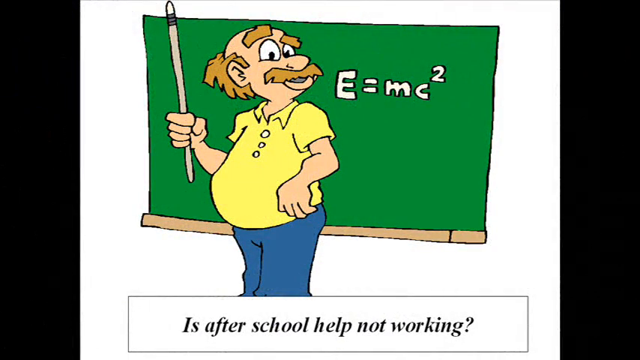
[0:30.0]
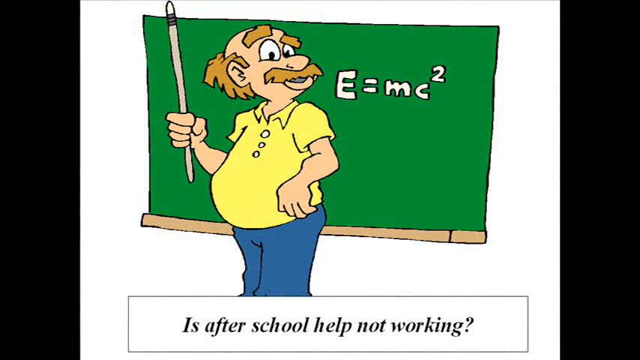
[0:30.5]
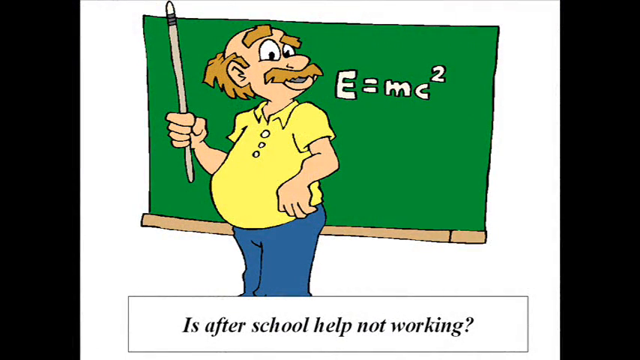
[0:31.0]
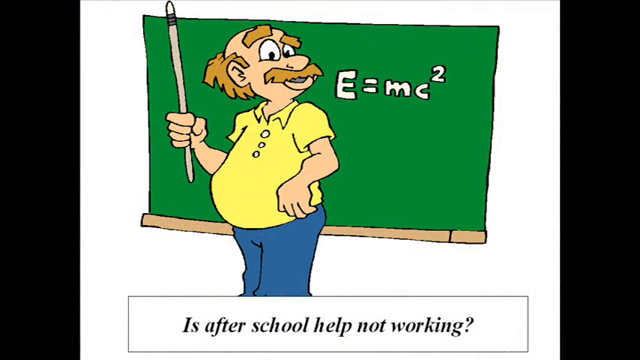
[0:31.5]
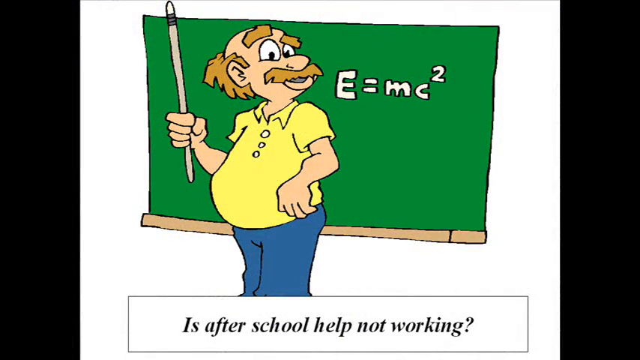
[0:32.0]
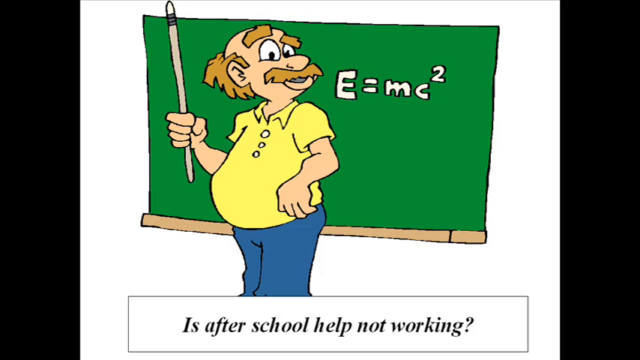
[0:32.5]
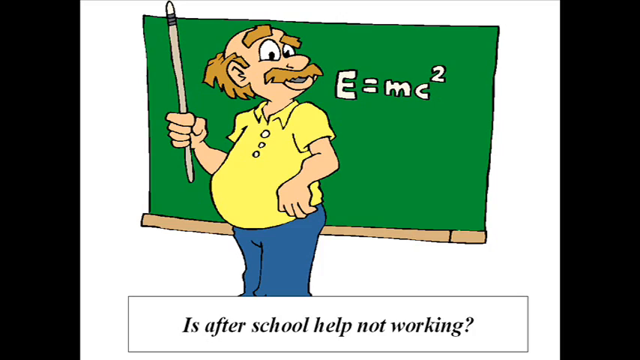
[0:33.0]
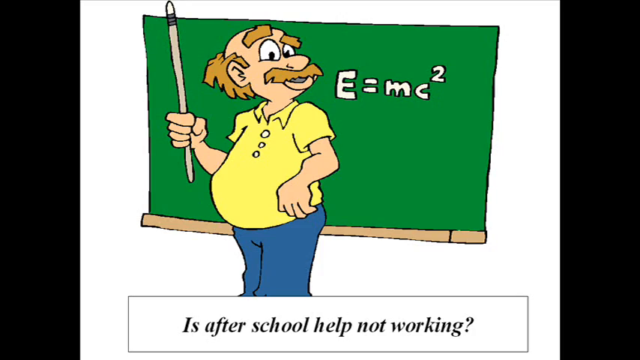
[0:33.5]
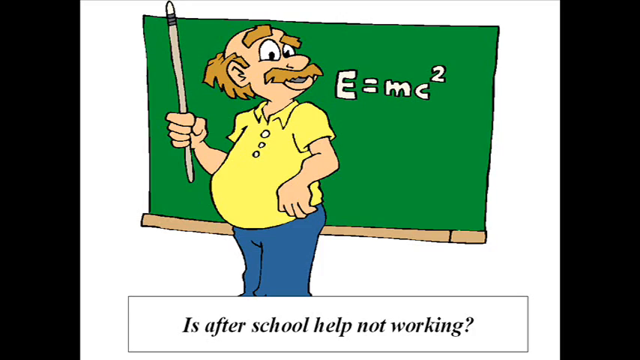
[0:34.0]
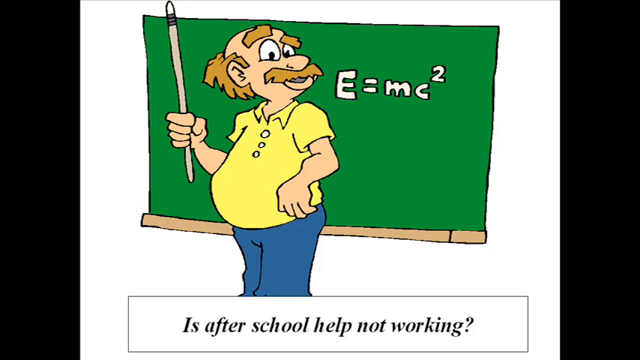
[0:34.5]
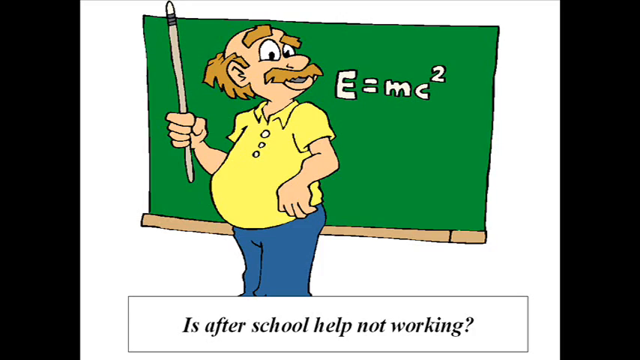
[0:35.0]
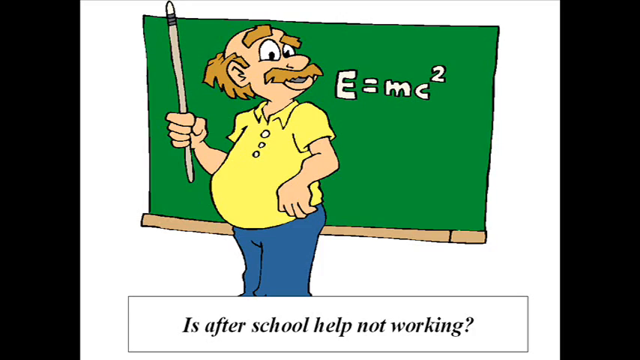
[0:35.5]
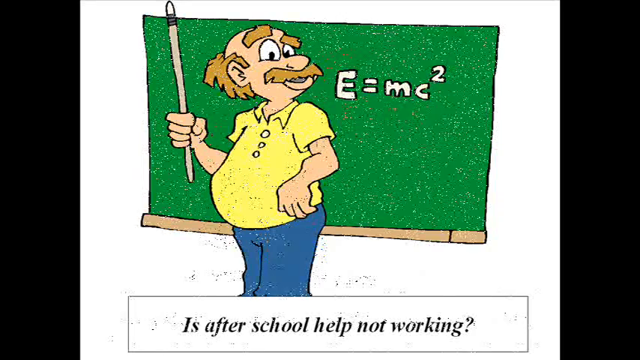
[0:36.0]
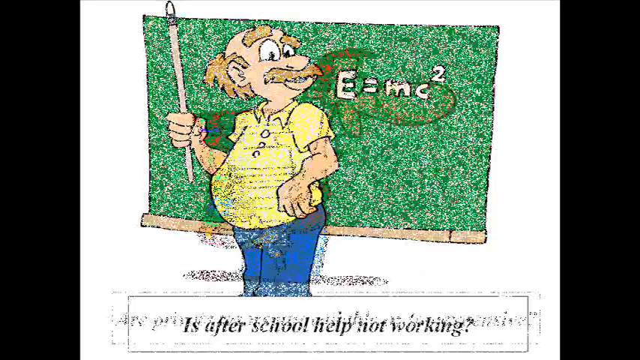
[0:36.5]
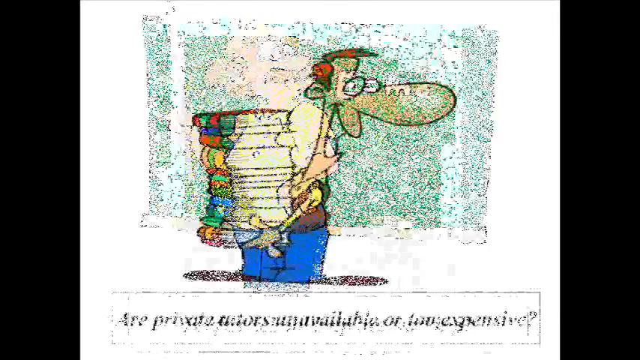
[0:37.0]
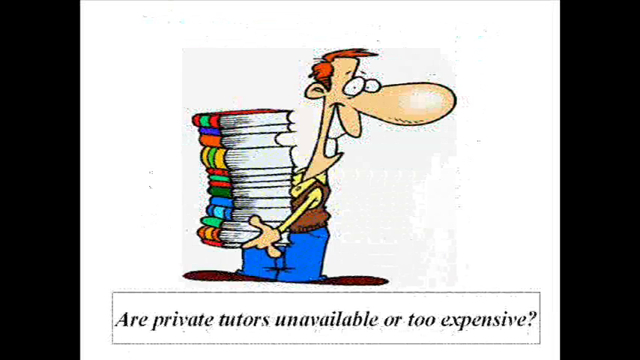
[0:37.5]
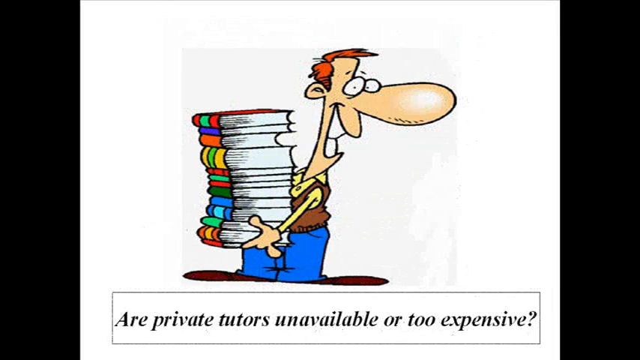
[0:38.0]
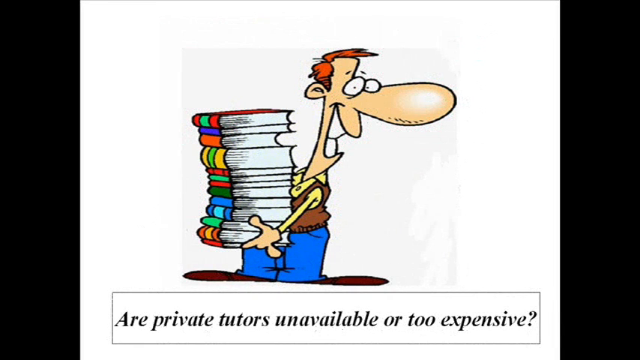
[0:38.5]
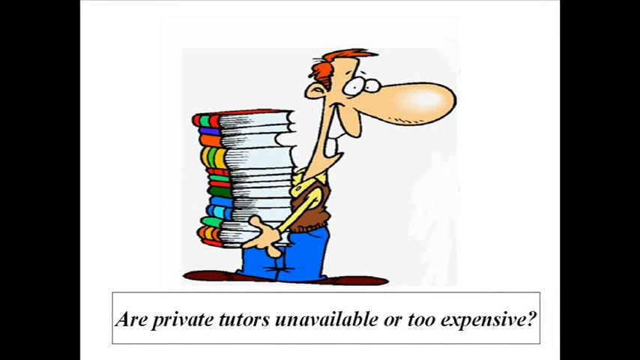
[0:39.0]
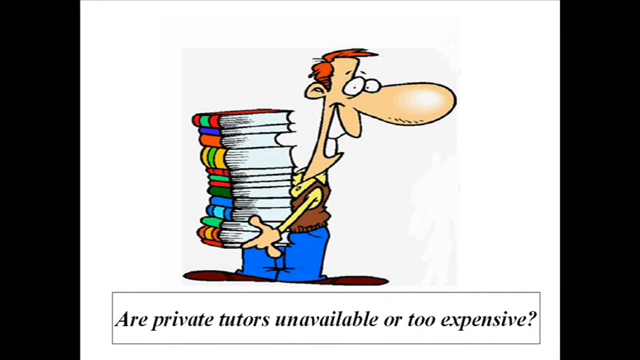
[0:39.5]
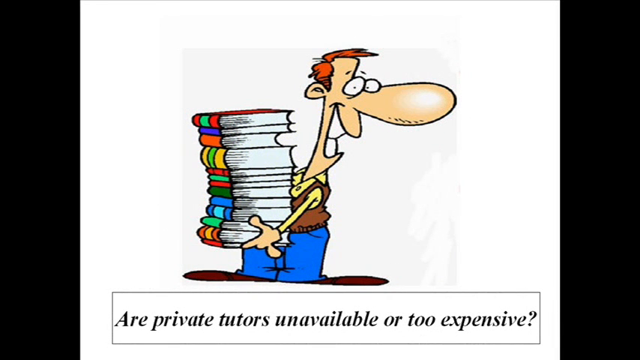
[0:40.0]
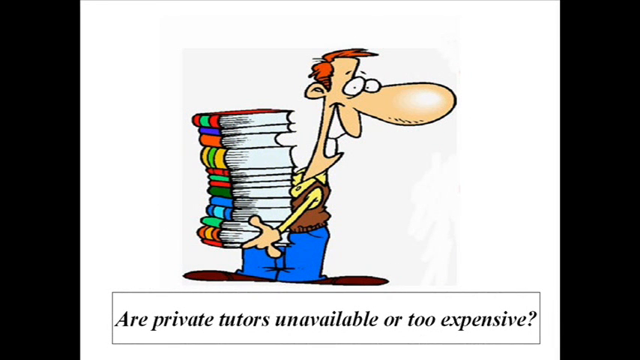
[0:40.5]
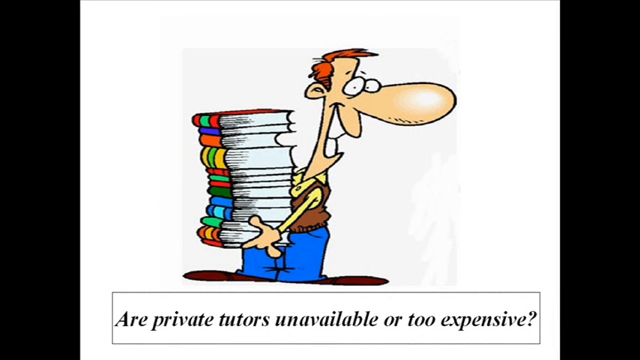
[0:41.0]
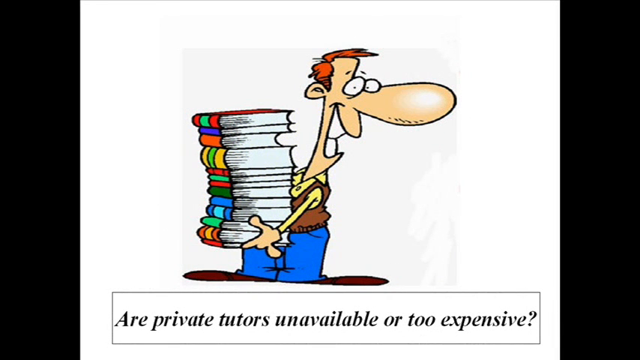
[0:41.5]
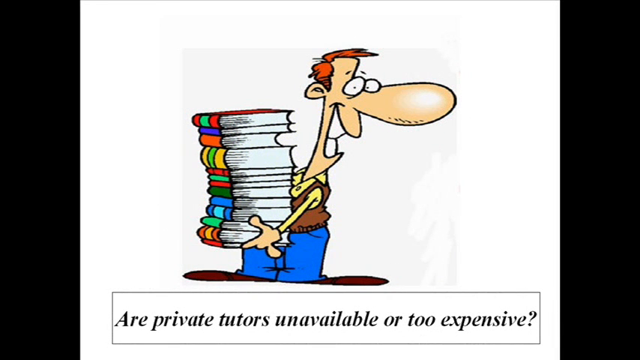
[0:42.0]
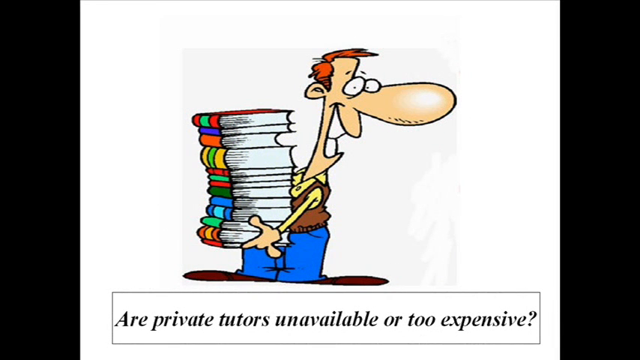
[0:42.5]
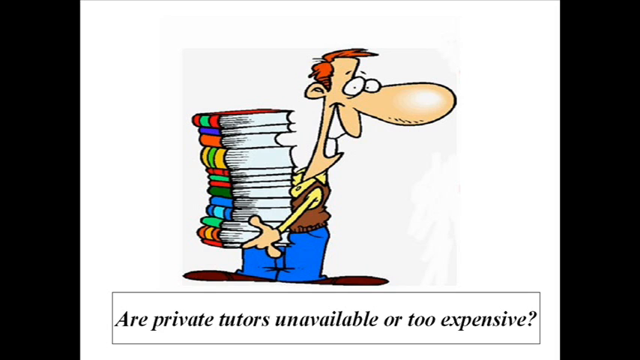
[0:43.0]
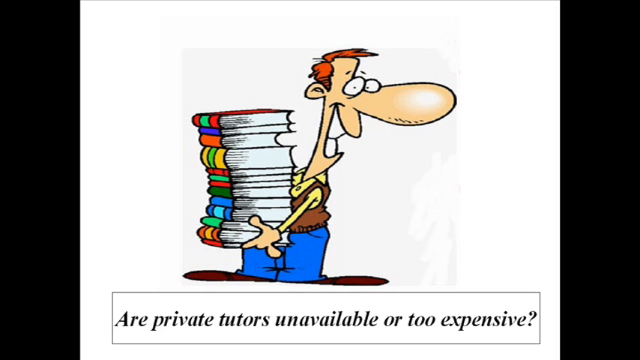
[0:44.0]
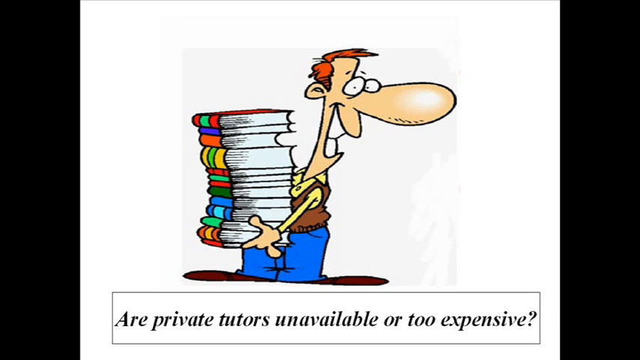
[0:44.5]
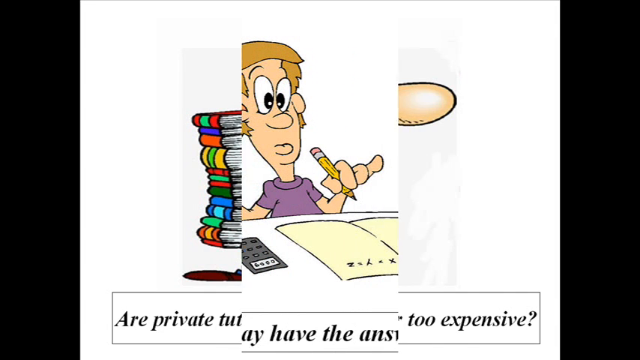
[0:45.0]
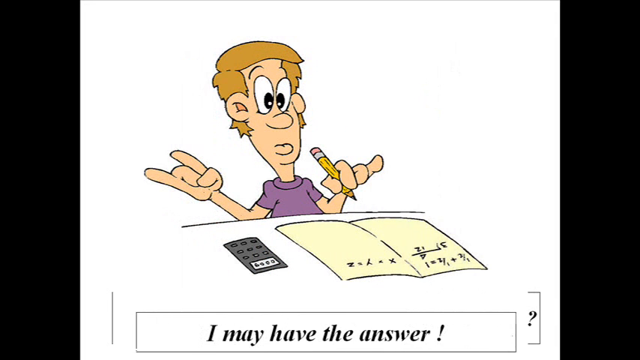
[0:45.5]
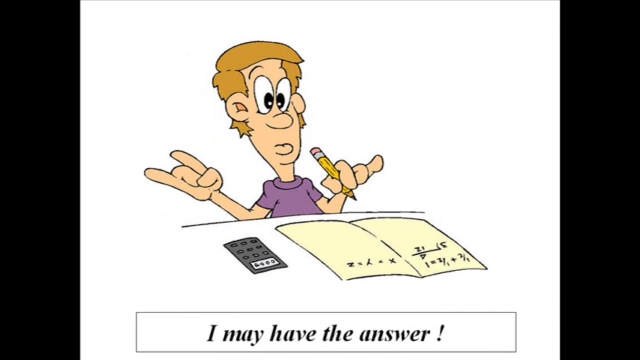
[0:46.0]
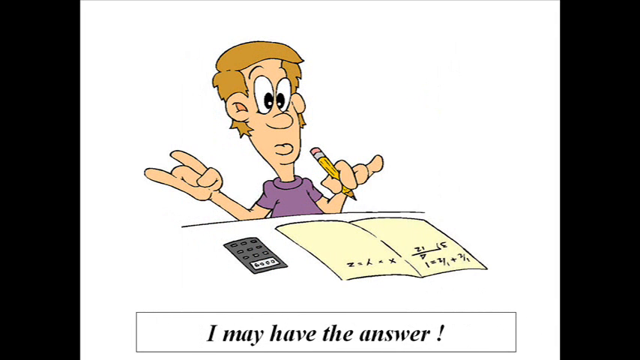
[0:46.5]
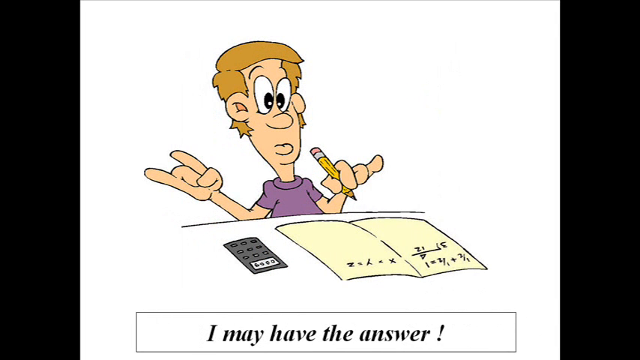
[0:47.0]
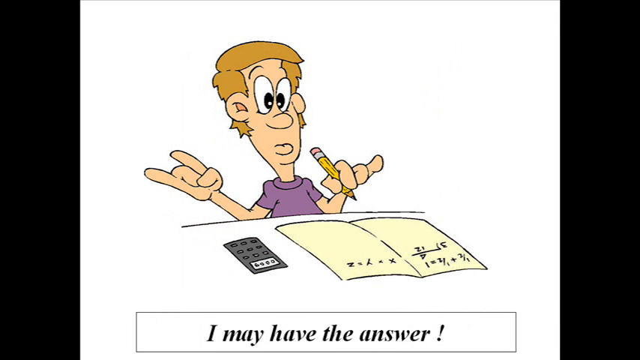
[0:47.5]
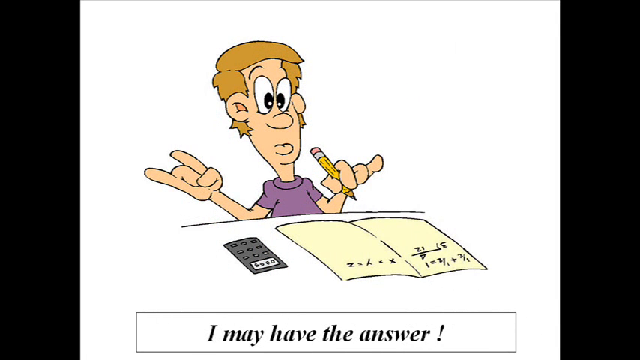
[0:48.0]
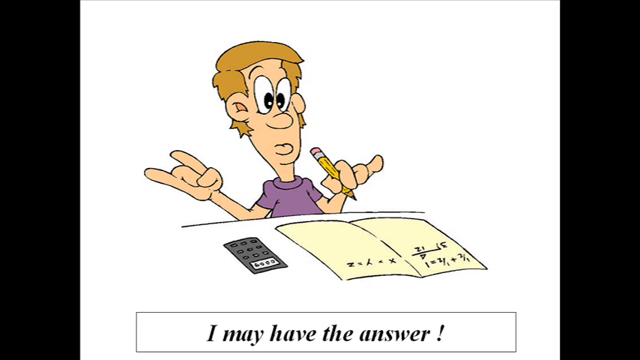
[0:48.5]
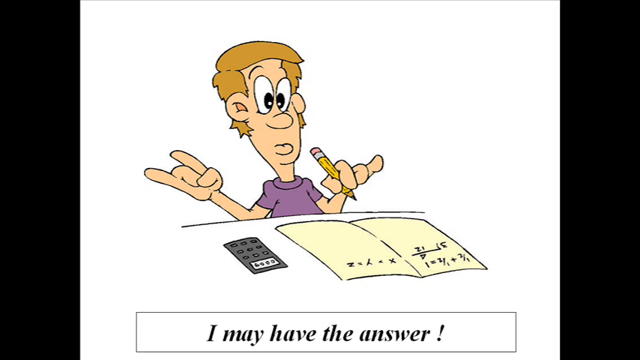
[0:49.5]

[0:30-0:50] The image of the cartoon man standing in front of the chalkboard continues. The screen then switches to another image with a white background showing a cartoon-style man with a big nose and orange hair, looking to the side and holding a stack of books in all sorts of different colors. At the bottom of the screen the text reads "are private tutors unavailable or too expensive?" Next, on a white background, a boy holds a pencil in his left hand with his right hand up. In front of him is a white desk with a piece of paper bearing some equations, and a calculator to the right of the paper. The boy wears a purple shirt and has light brown blonde hair. Text below reads "I may have the answer."